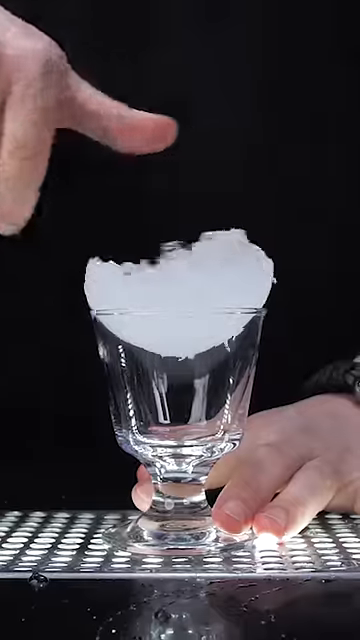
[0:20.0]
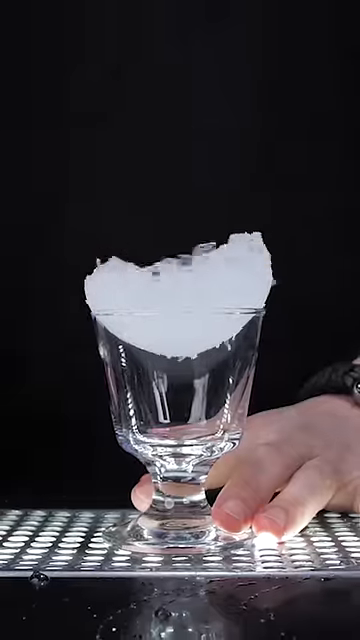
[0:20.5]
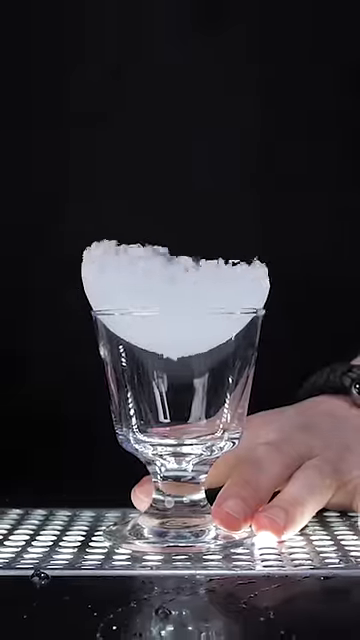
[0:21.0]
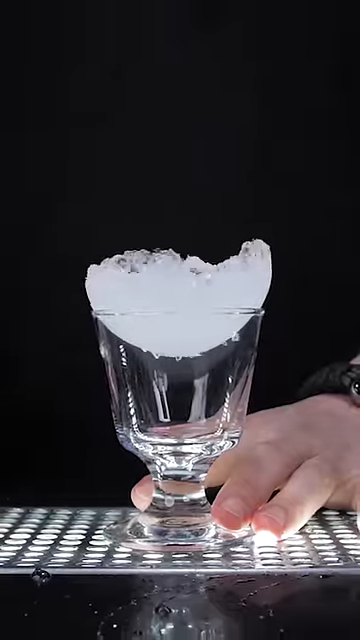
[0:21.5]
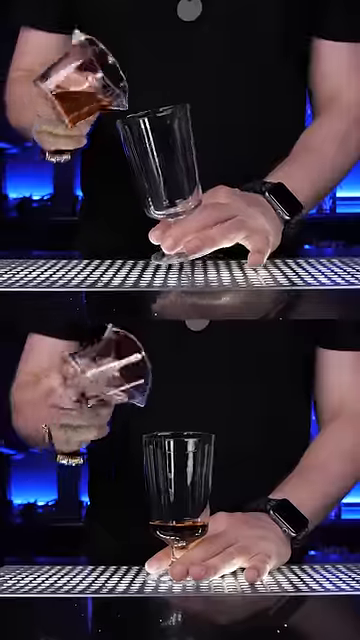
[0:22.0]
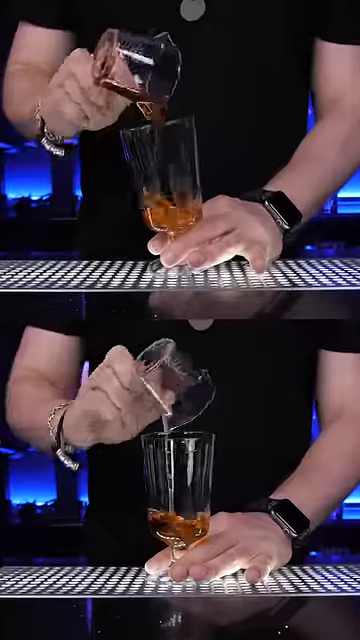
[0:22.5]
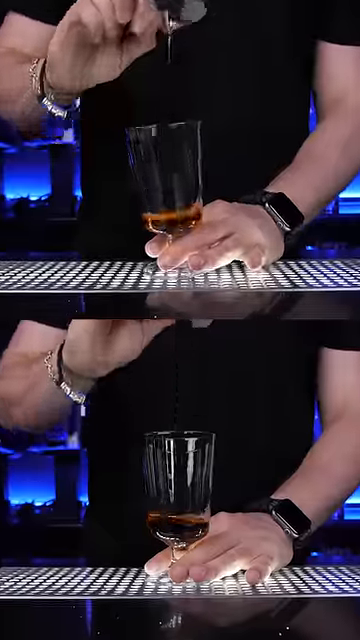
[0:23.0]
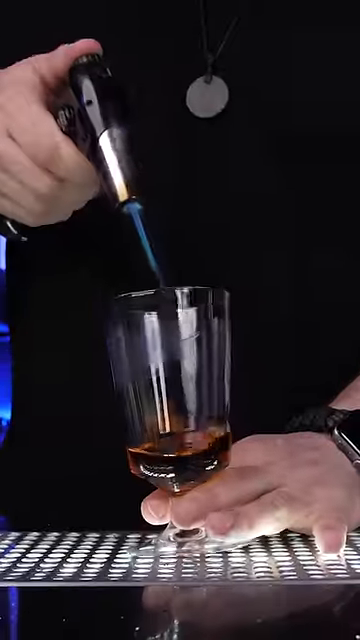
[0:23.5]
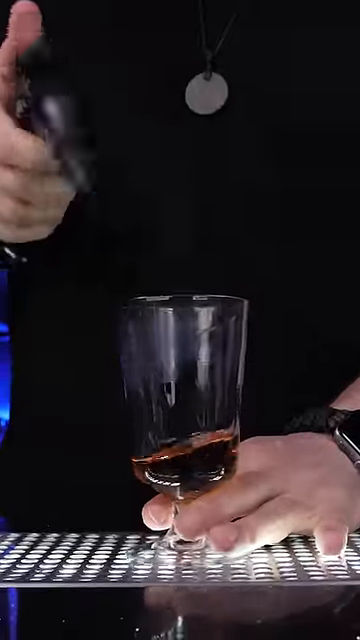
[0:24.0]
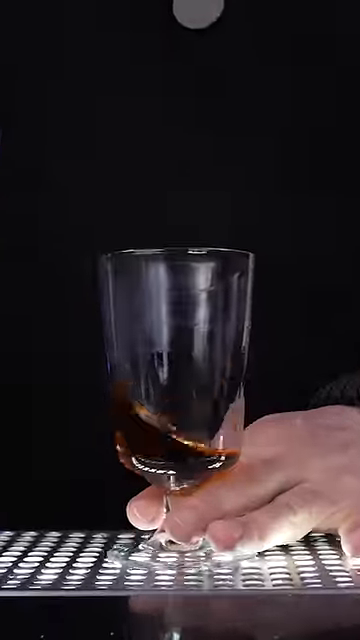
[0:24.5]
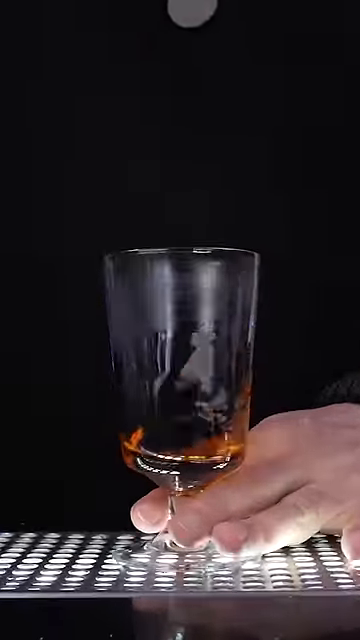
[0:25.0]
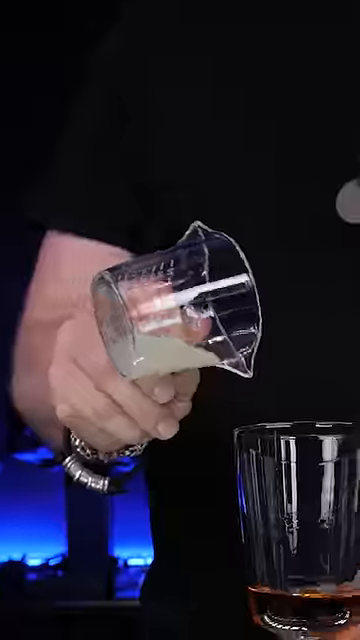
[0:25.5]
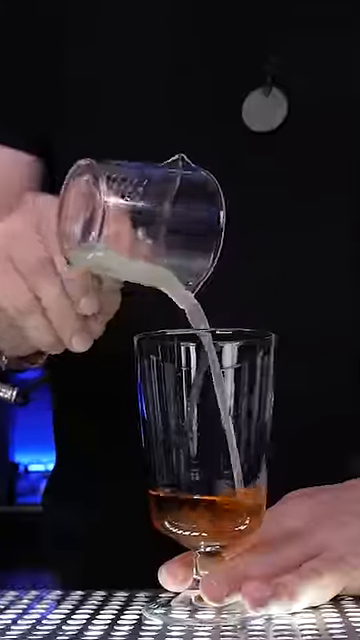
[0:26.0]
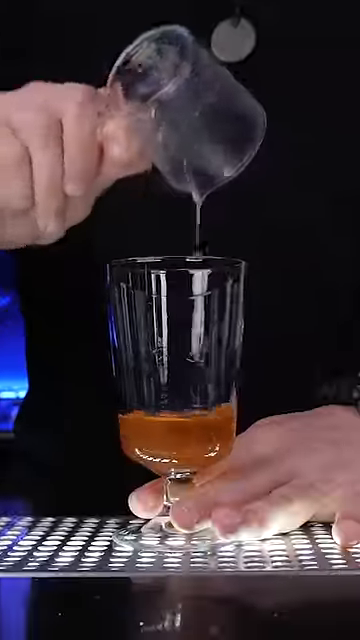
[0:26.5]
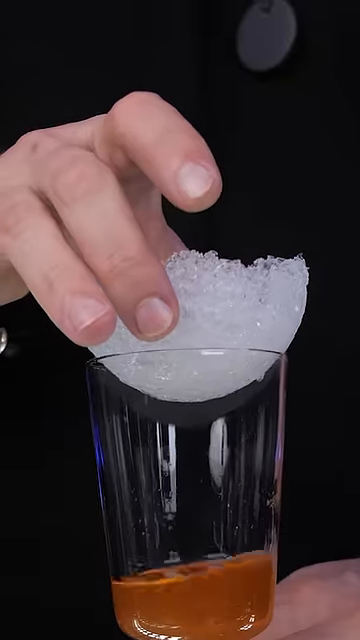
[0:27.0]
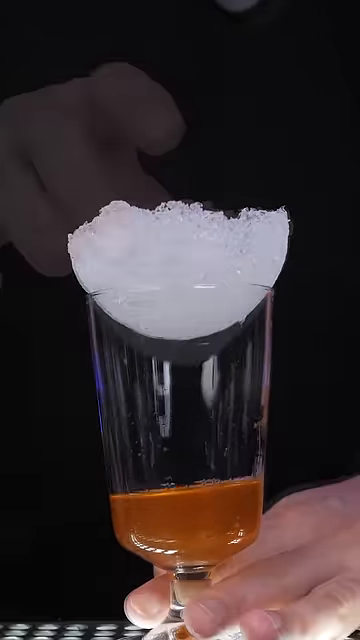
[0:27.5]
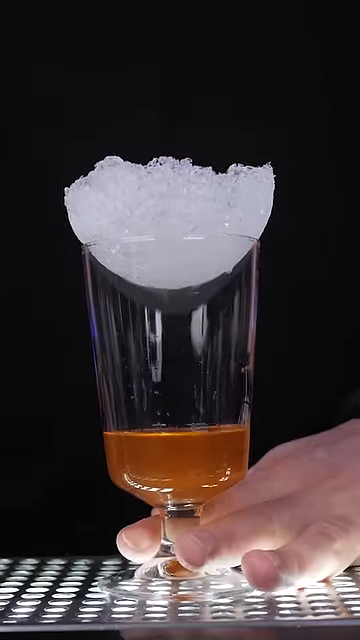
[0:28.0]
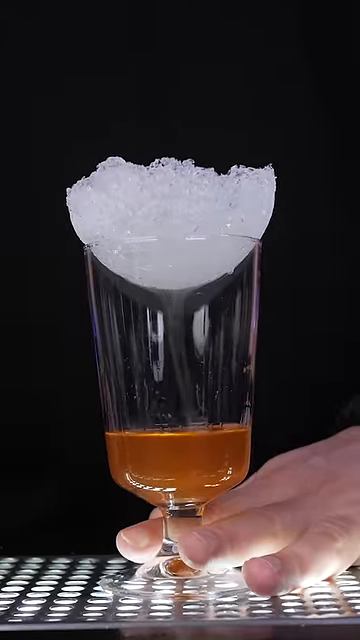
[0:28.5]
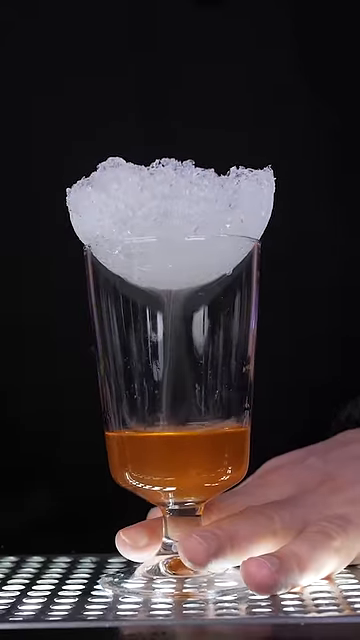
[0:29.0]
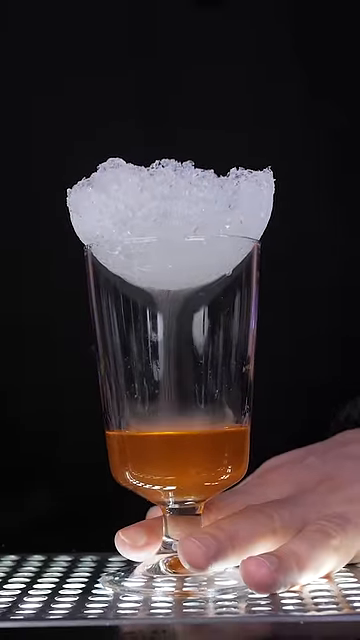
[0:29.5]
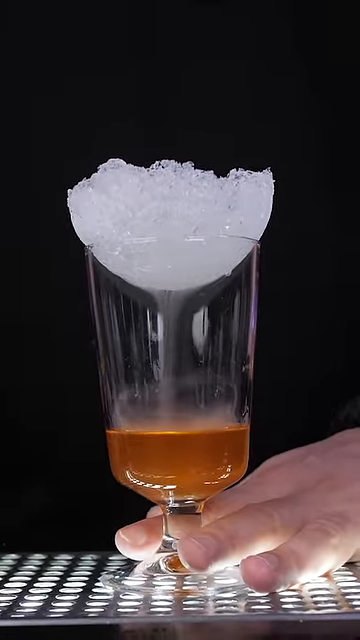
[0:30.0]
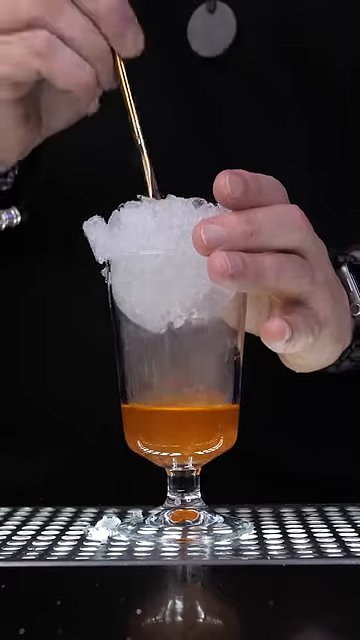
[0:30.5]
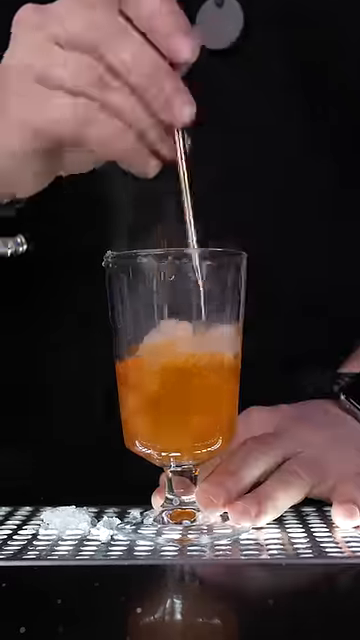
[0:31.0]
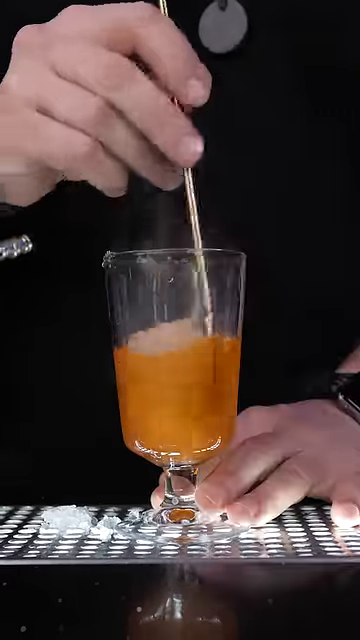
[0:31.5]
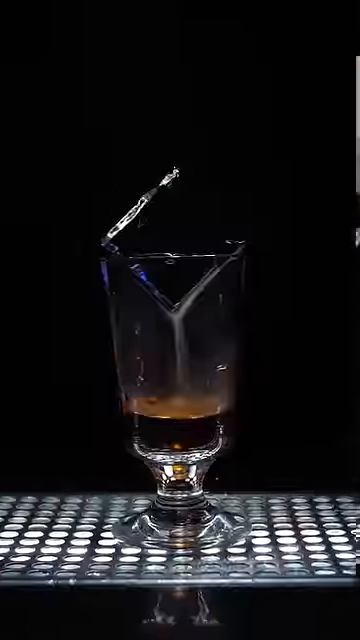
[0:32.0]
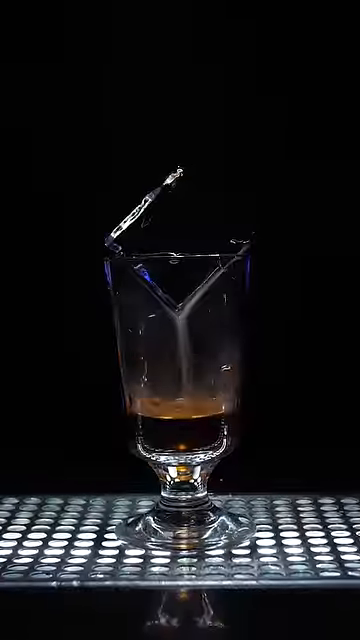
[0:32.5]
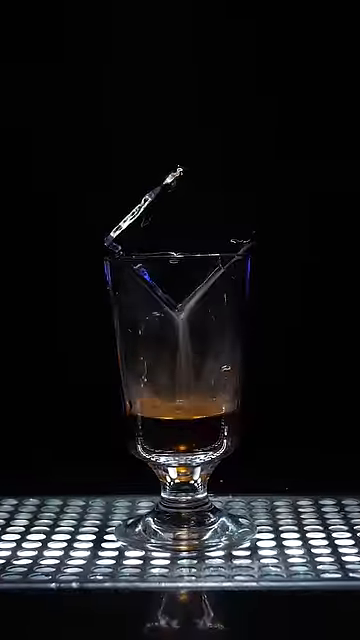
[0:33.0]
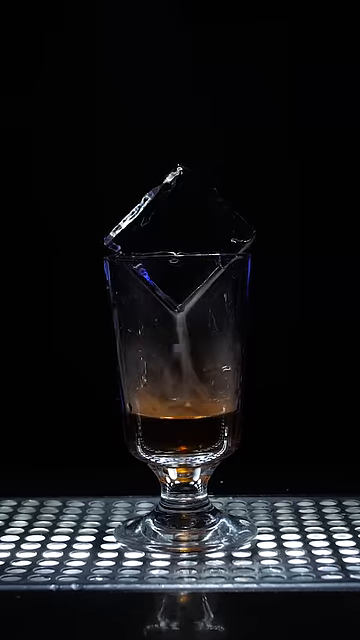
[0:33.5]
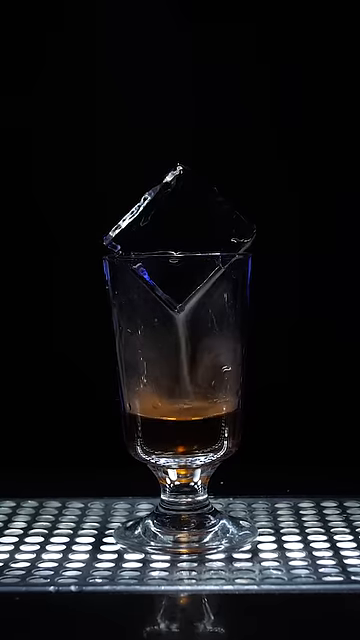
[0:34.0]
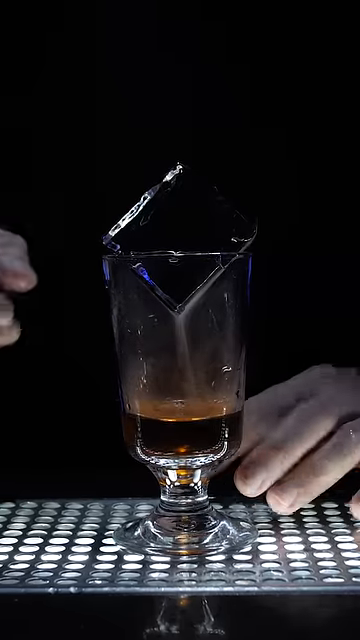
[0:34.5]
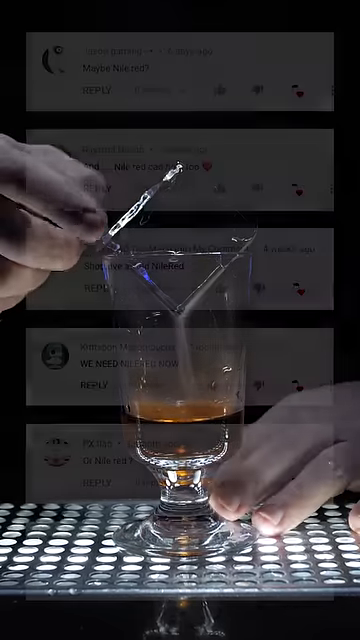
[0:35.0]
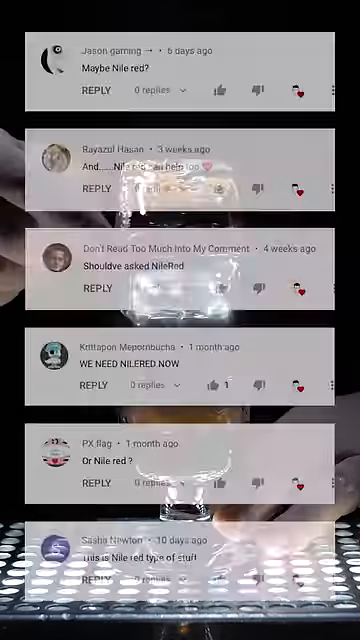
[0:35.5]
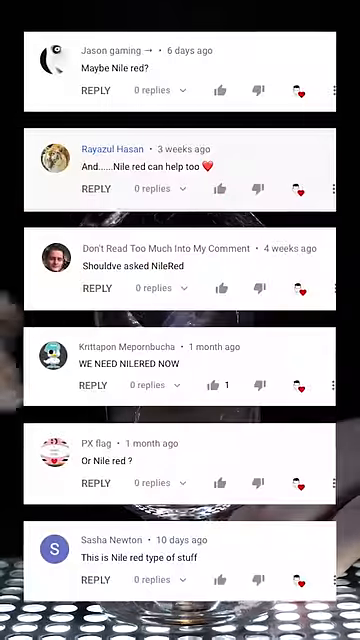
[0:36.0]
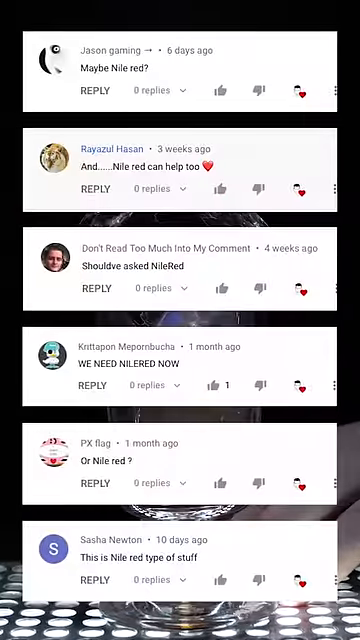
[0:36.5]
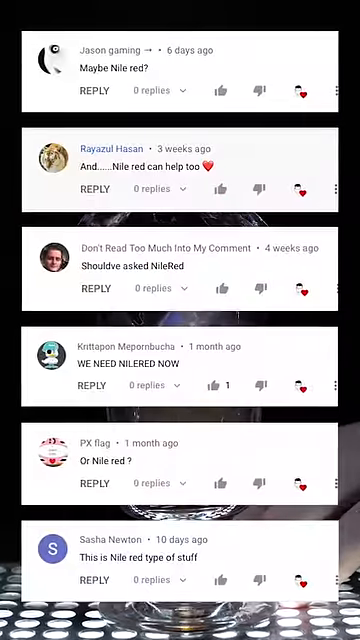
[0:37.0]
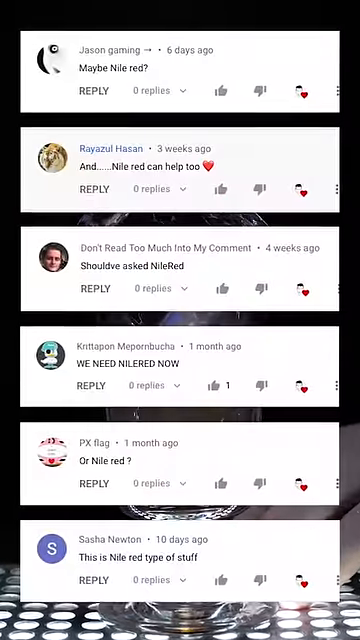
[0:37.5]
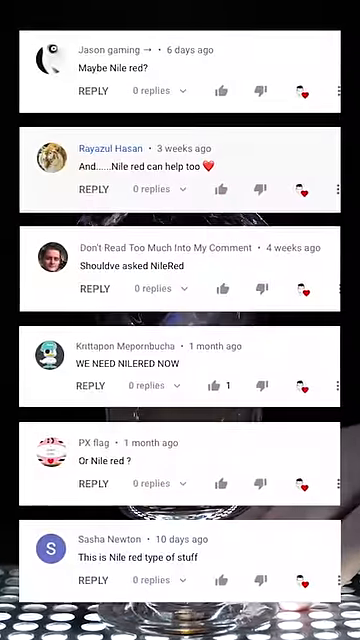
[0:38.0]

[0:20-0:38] On a solid black screen there is a small, short, clear glass wine glass, and someone puts a chunk of ice on top of the glass and spins it around in circles. He then takes a small, clear beaker of fluid and pours it into the glass. Next he takes a butane lighter and shoots a flame into the glass. He then takes another small glass with more liquid and dumps it into the glass. He puts another piece of ice on top of the rim, and when he does, steam shoots out from the ice and comes down into the liquid at the bottom of the glass. More pop-up posts then appear across the screen: one says "maybe Nile Red", another "and Nile Red can help too", another "should have asked Nile Red", another "we need Nile Red now", another "or Nile Red", and the last "this is Nile Red type of stuff".